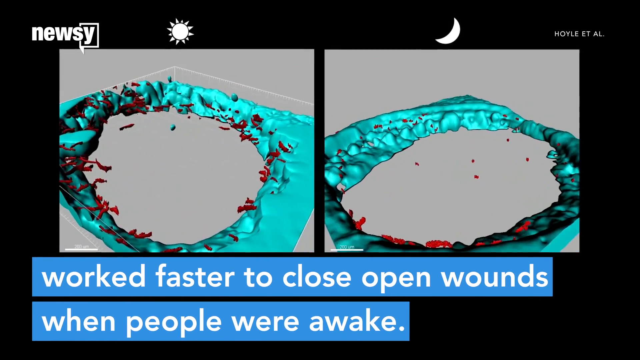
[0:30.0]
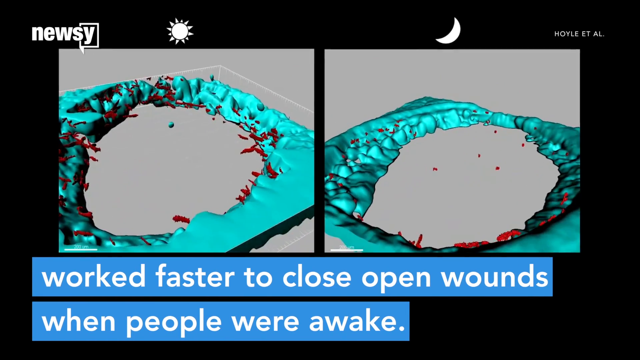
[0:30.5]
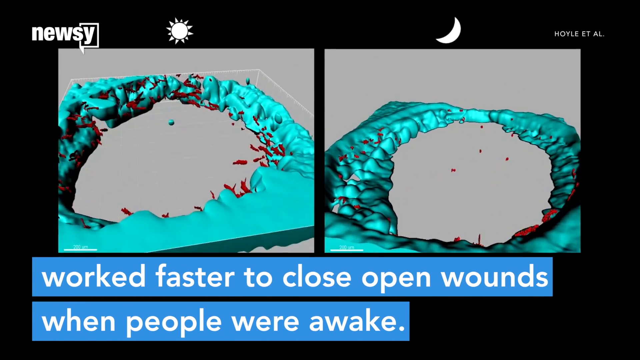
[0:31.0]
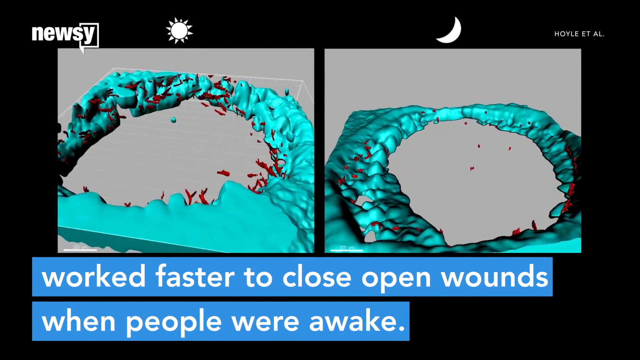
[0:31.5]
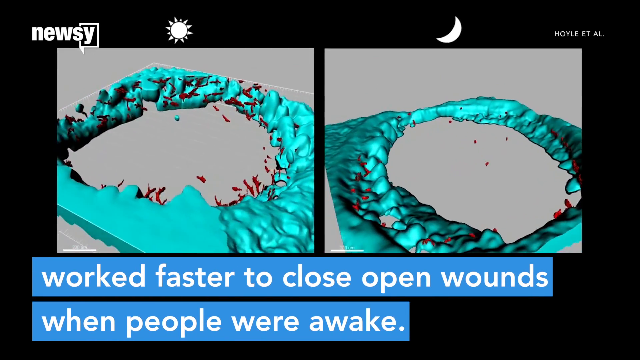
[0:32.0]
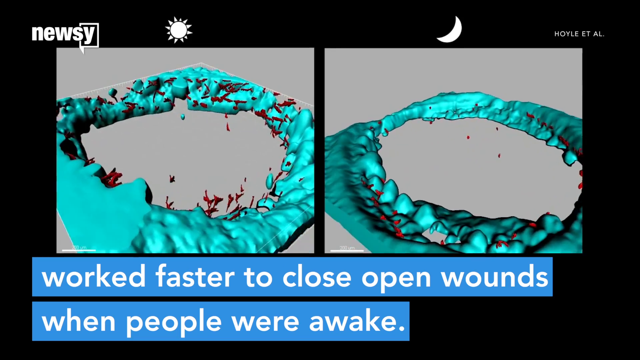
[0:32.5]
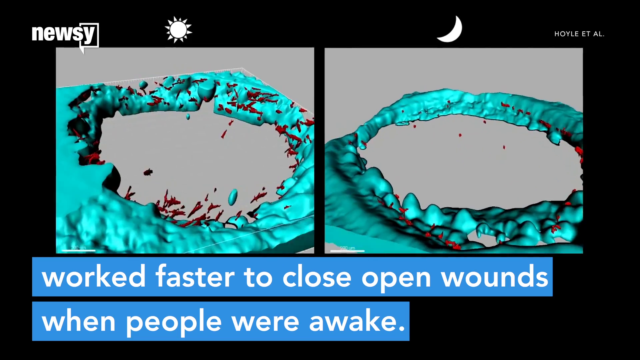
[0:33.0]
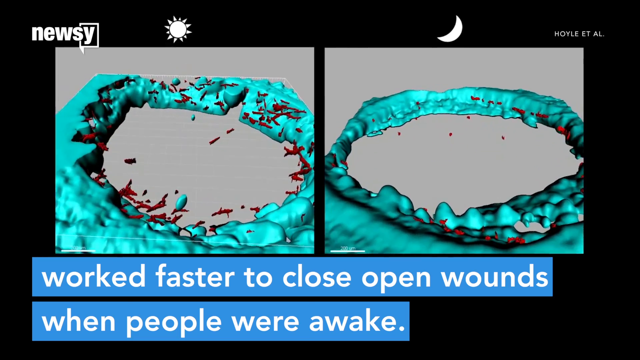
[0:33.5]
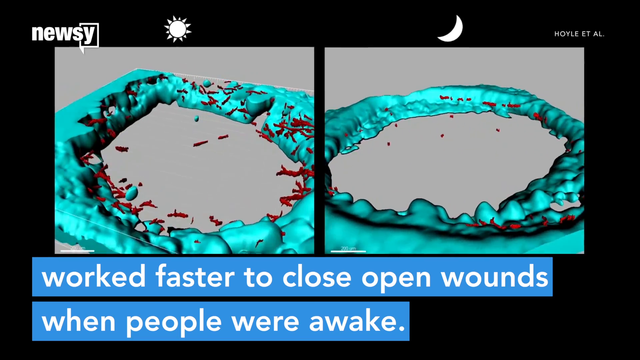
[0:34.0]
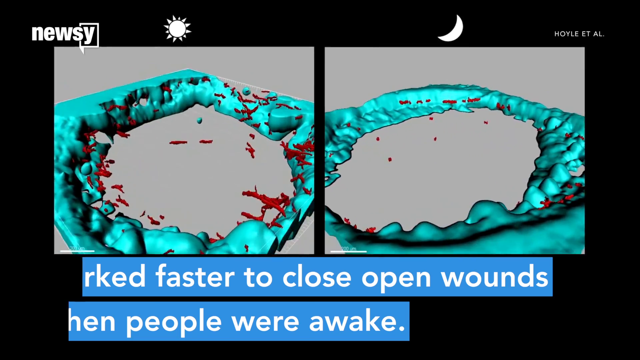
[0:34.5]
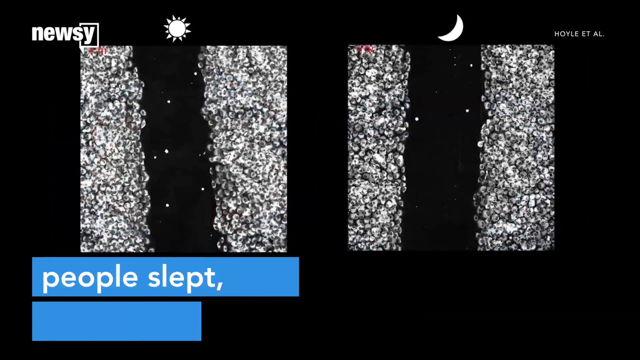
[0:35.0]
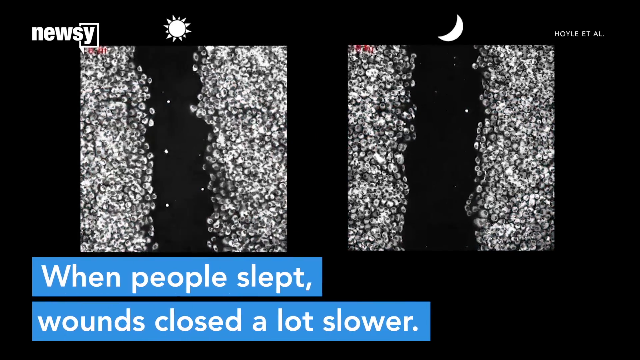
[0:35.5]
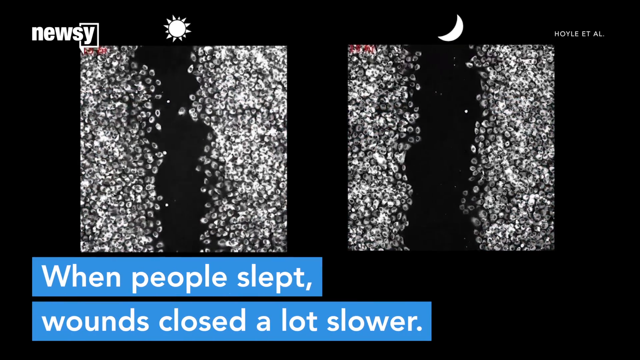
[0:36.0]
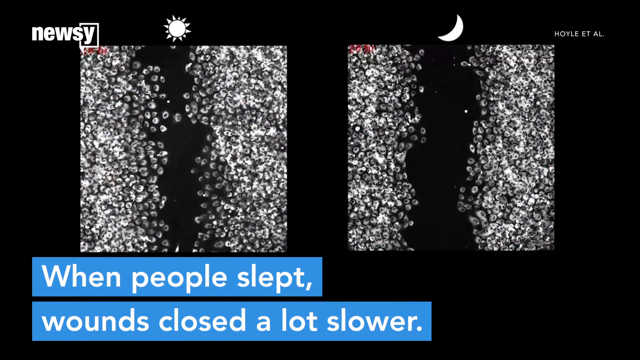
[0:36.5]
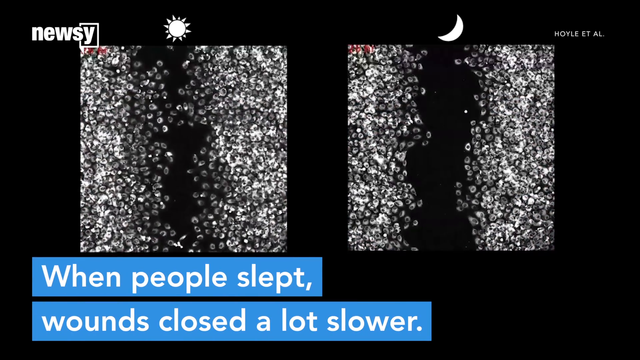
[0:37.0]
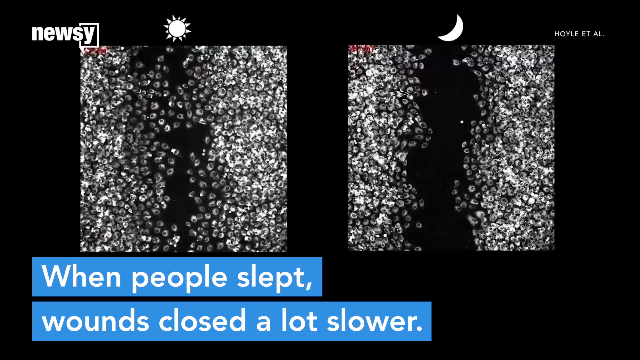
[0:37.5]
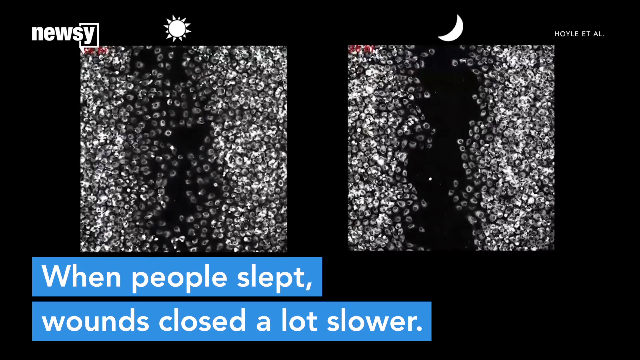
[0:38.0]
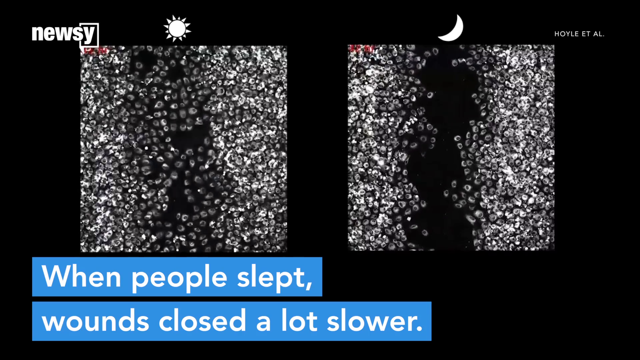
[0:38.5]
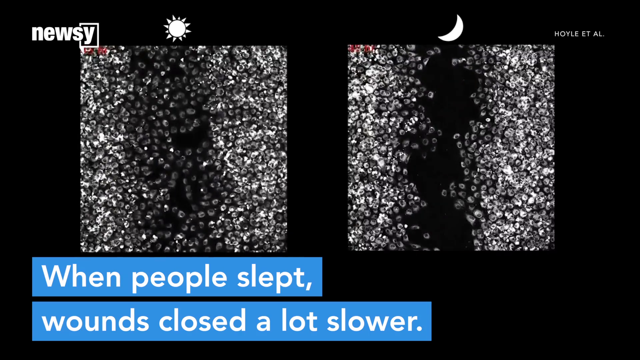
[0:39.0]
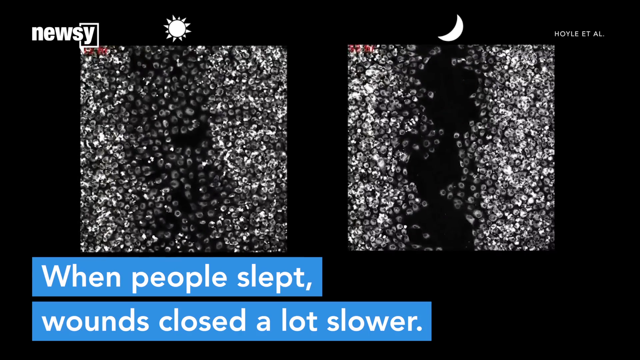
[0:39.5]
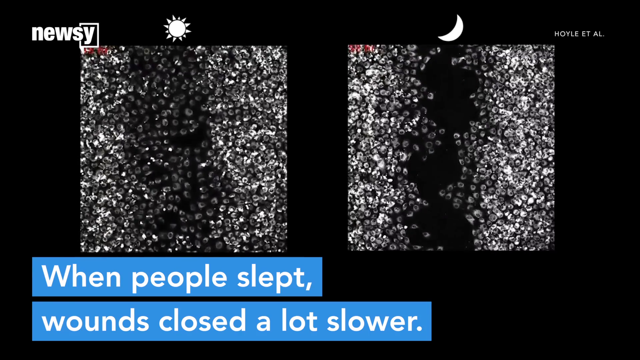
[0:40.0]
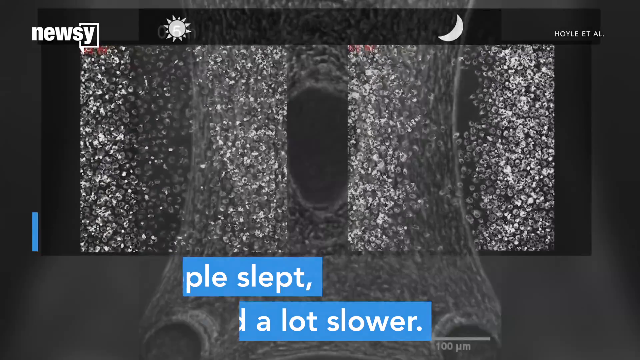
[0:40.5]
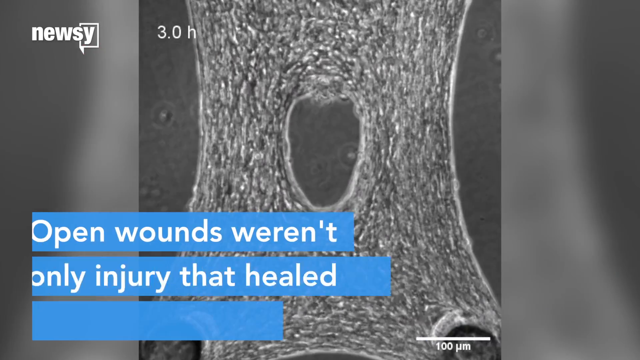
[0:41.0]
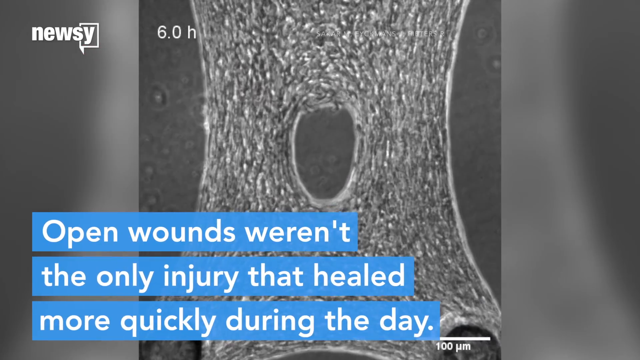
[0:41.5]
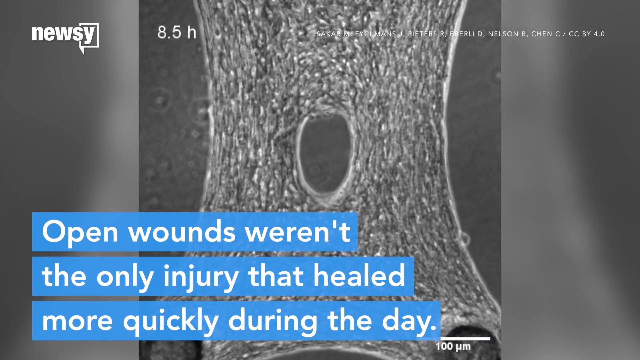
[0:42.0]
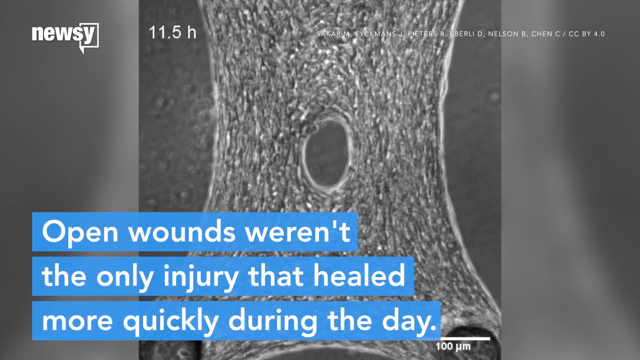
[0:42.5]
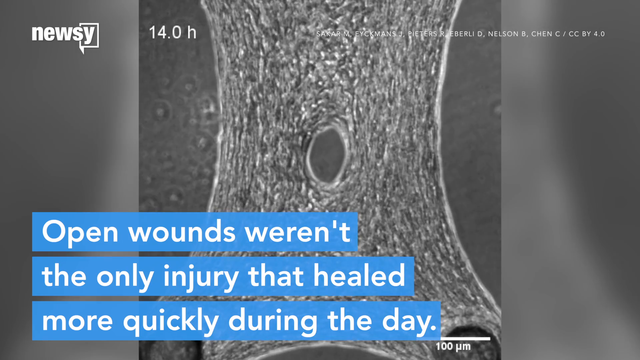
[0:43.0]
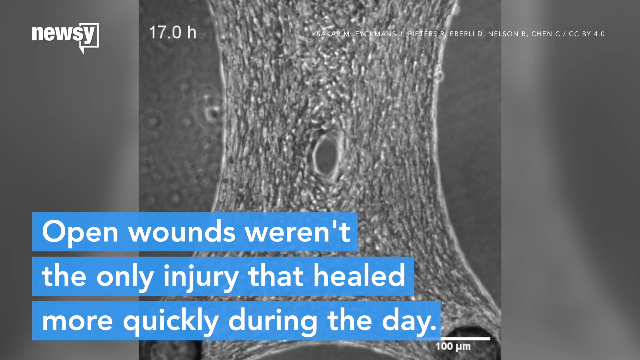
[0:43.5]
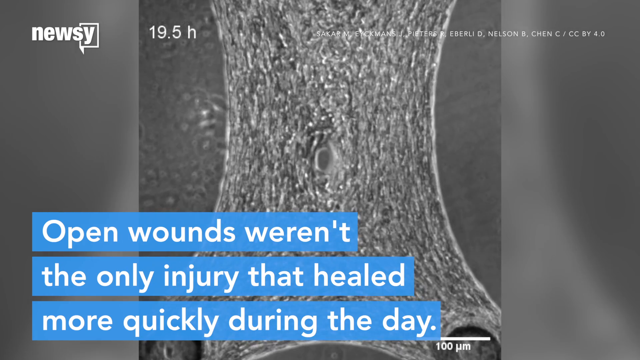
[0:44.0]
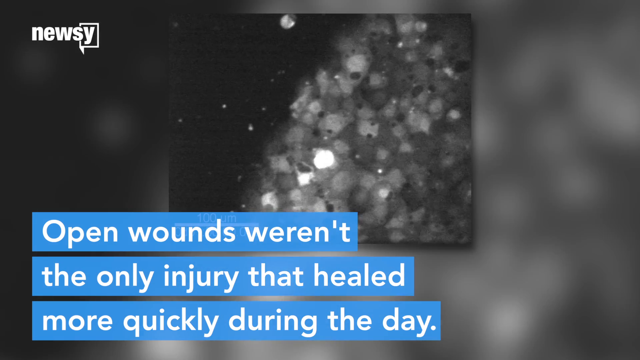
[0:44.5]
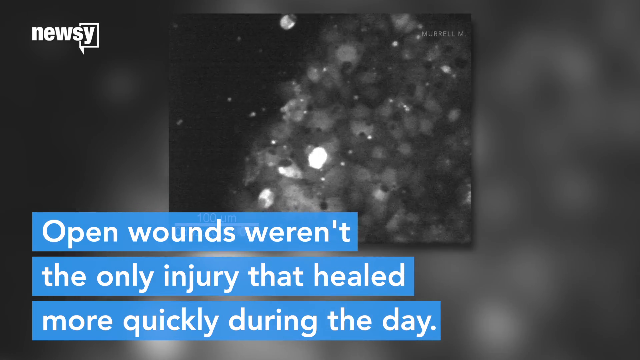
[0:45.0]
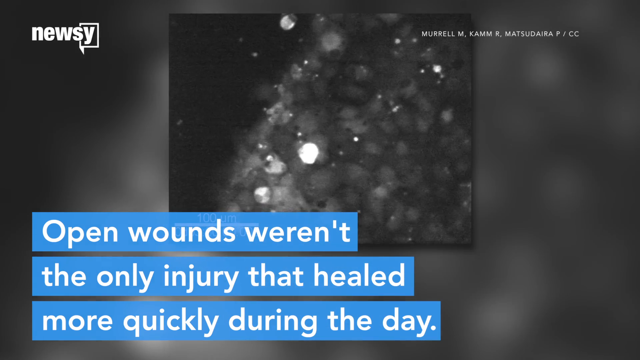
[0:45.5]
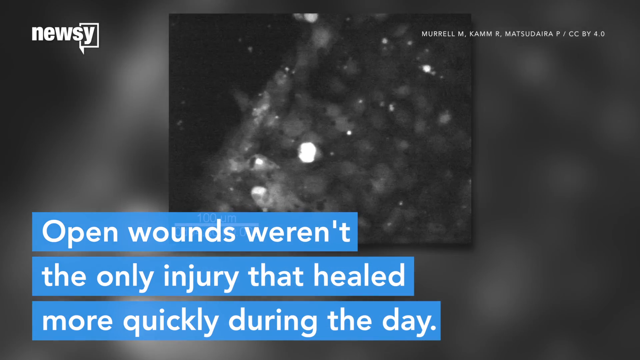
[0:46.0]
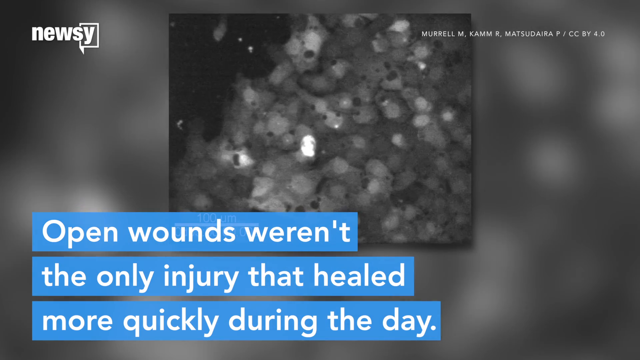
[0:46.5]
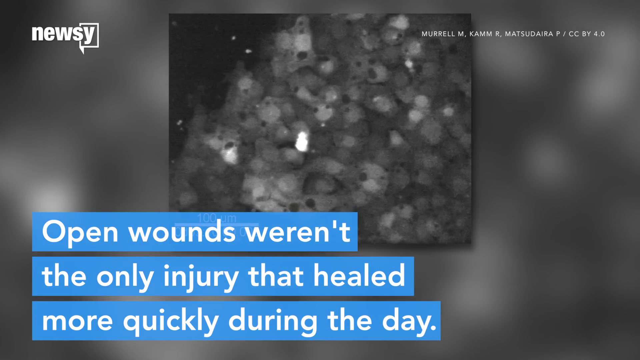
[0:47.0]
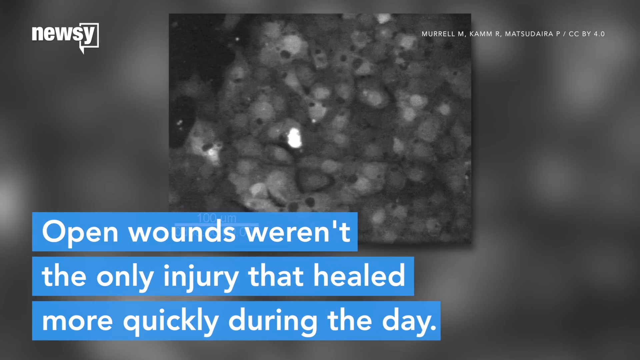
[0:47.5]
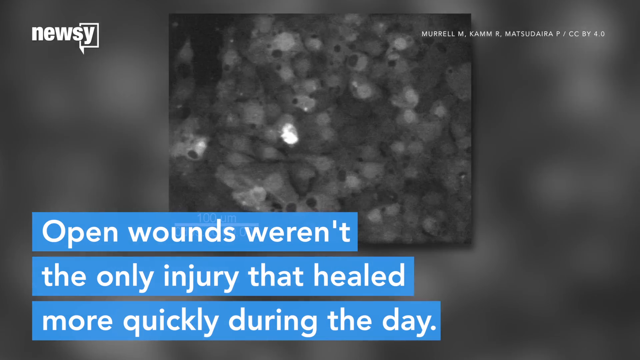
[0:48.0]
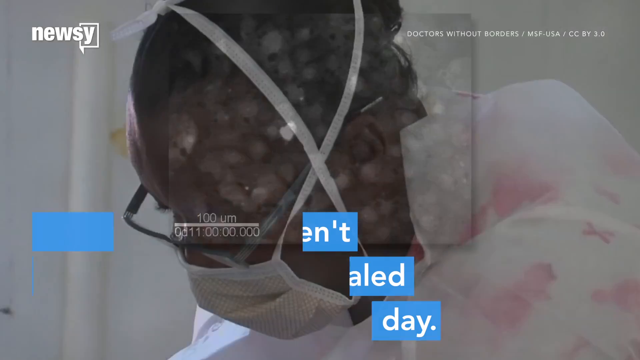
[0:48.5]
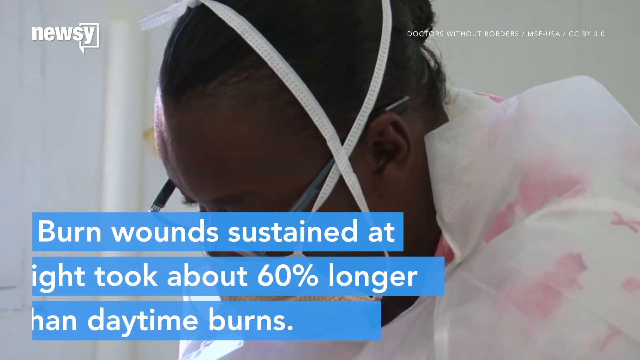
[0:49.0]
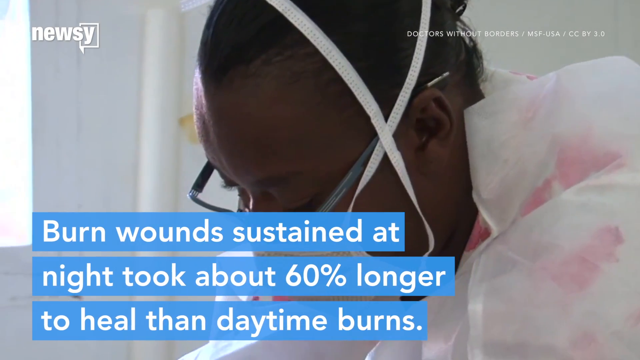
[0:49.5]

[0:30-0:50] Text reads "worked faster to close open wounds when people were awake," over imagery of the wound healing process and the components involved. Next is a black-and-white microscopic view of wound healing with two layers facing each other, made of small particles that look like small beads. The text reads "when people slept, wounds closed a lot slower." The image on the left has a sun icon at the top, marking daytime, and the image on the right, showing the same thing, has a crescent moon on top, marking nighttime; the wound process appears faster in the daytime image than in the nighttime one. Another microscopic video of wound healing shows something that looks stretched out with a circle in the middle, with the text "open wounds weren't the only injury that healed more quickly during the day." As the video progresses, the circle gets smaller and smaller until it disappears. Another microscopic video of wound healing follows, then the video cuts to a close-up of a doctor wearing a face mask, with text that reads "burn wounds sustained at night took about 60% longer to heal than daytime burns."